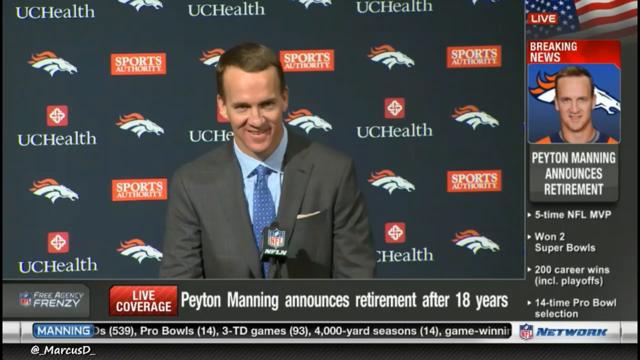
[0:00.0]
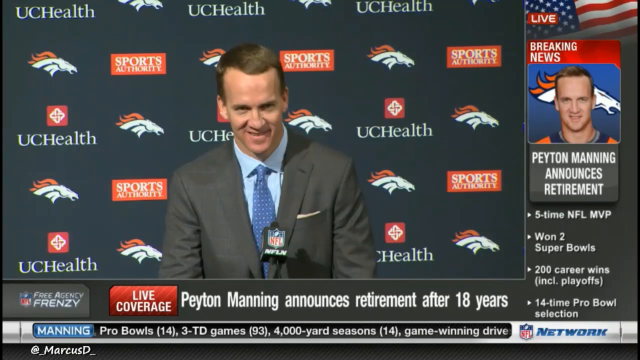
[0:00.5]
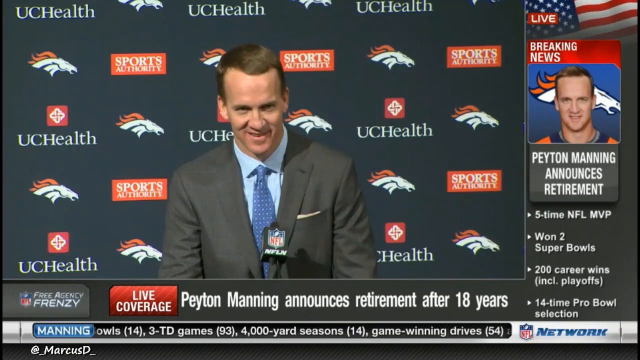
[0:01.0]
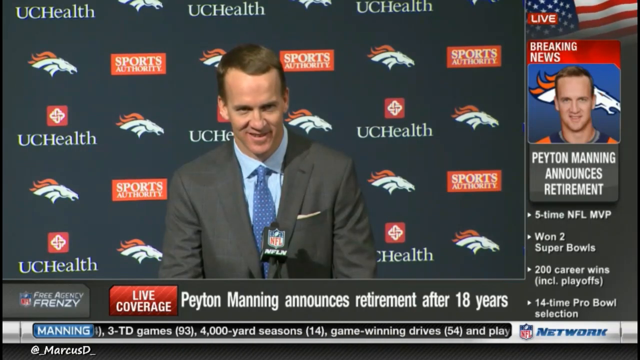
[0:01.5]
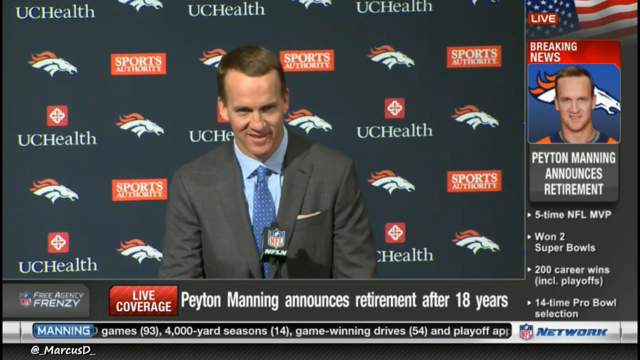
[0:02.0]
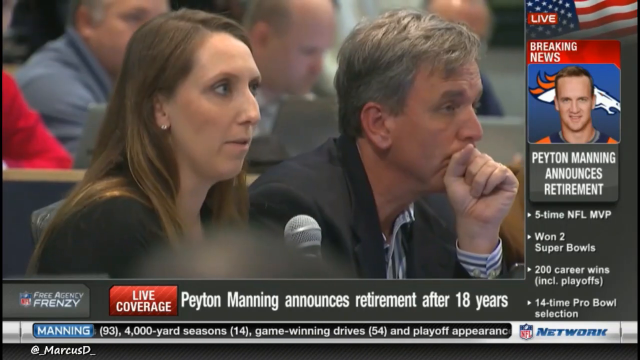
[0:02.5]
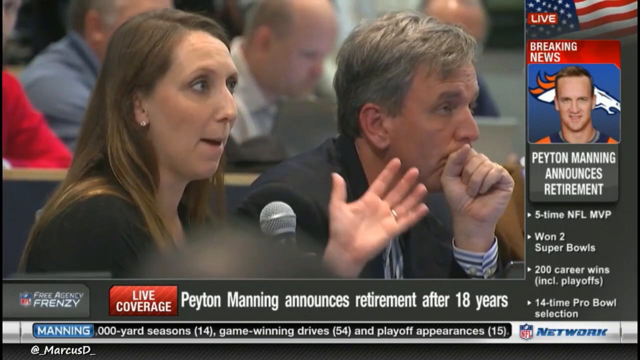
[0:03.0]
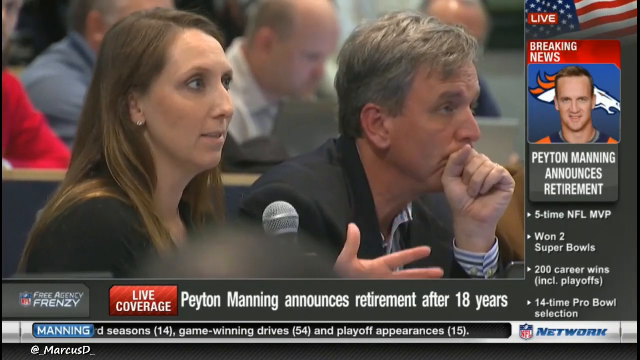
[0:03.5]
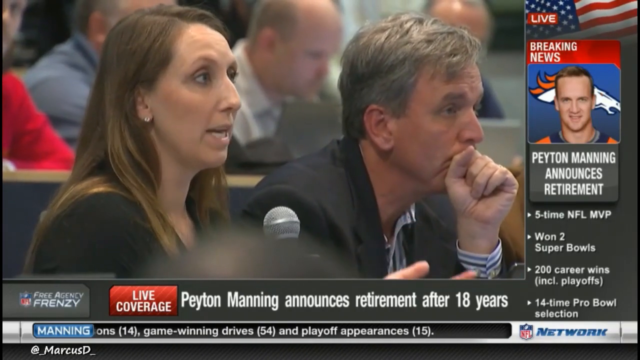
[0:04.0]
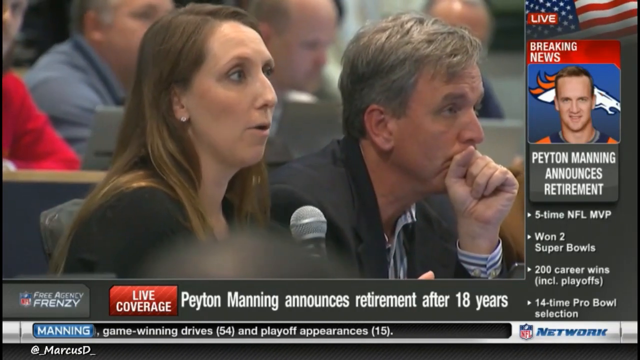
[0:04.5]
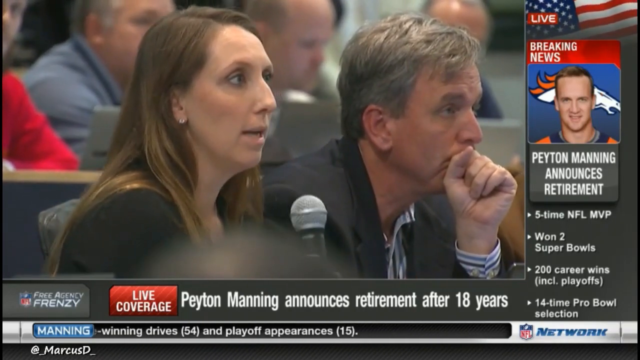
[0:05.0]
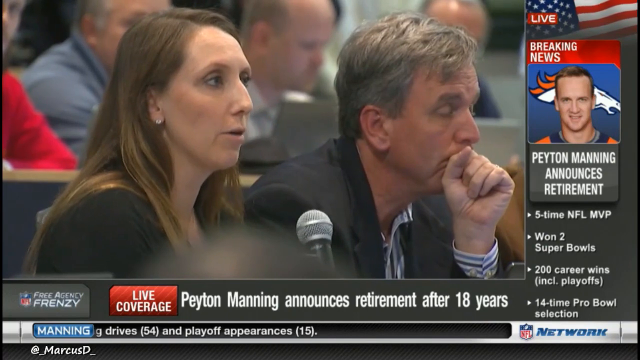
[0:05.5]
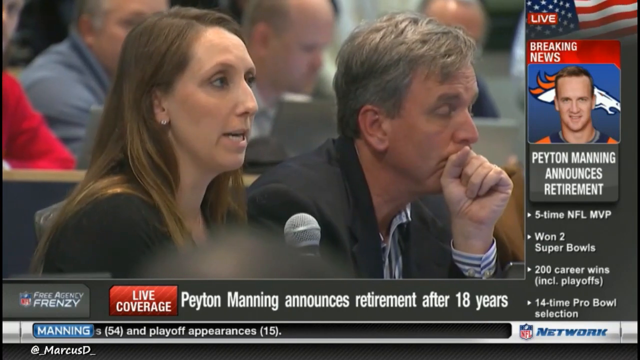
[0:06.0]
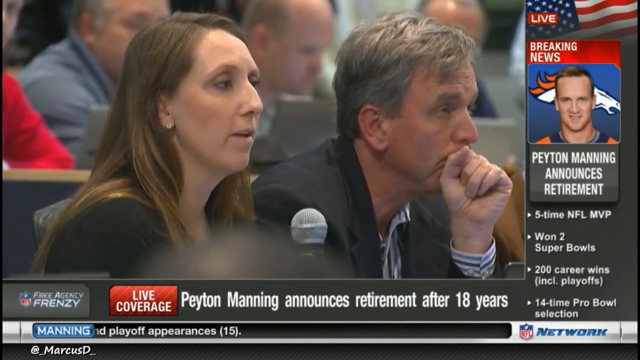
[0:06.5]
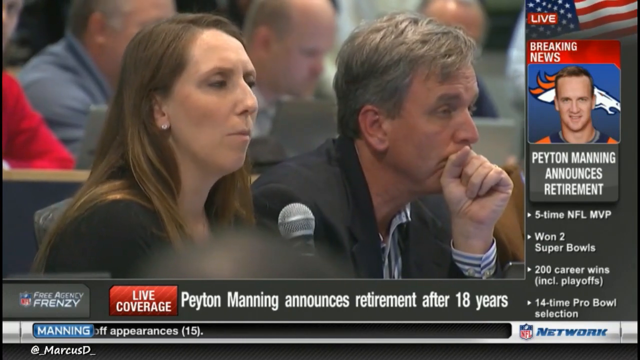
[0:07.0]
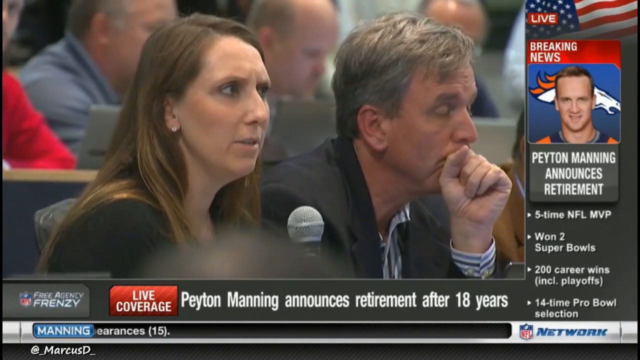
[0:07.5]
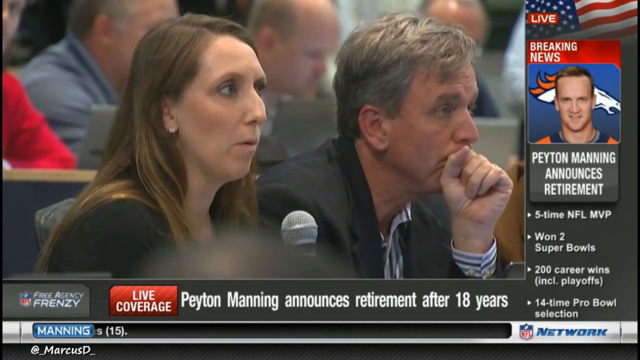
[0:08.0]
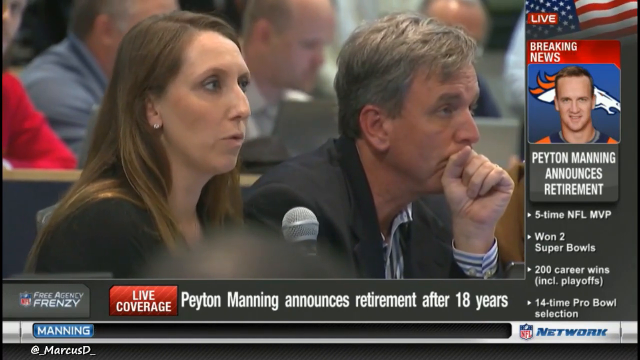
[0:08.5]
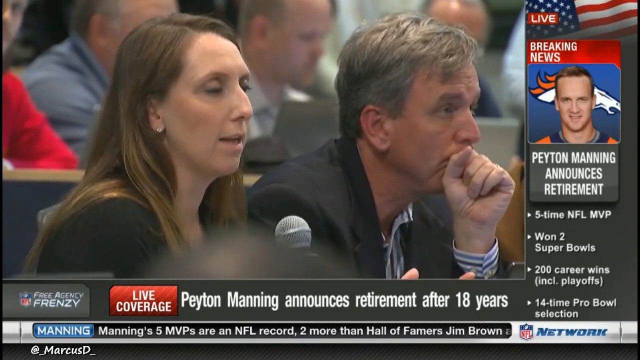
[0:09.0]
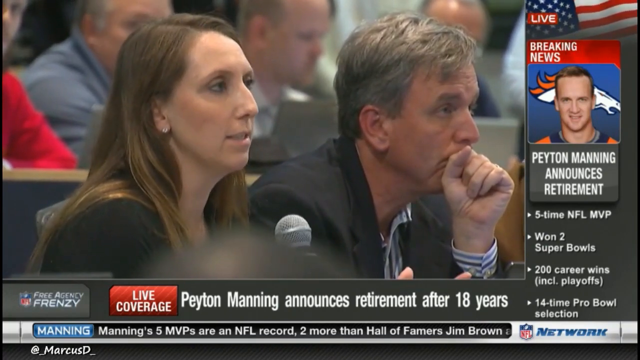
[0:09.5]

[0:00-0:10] Peyton Manning announces his retirement. On-screen information shows that he is a five-time NFL MVP, has won two Super Bowls, and has 200 career wins, inclusive of playoffs. He sits in front of a group of people, some of whom are asking him questions. He wears a gray suit, a light blue shirt, and a blue tie. The background wallpaper carries the UC Healthy logo, with its lettering and an animal shown as a horse's head. There is also an orange rectangle showing sports and athletics, though it is hard to see. Manning gives his announcement and takes questions from the people seated in front of him.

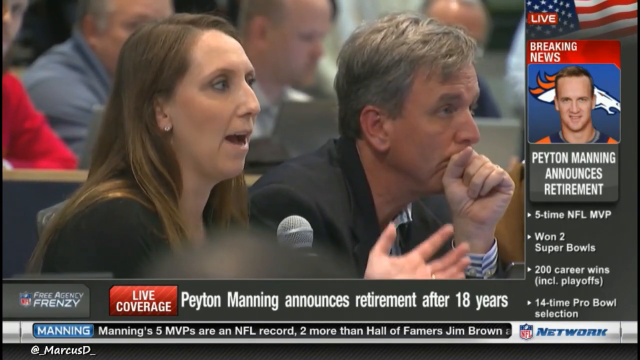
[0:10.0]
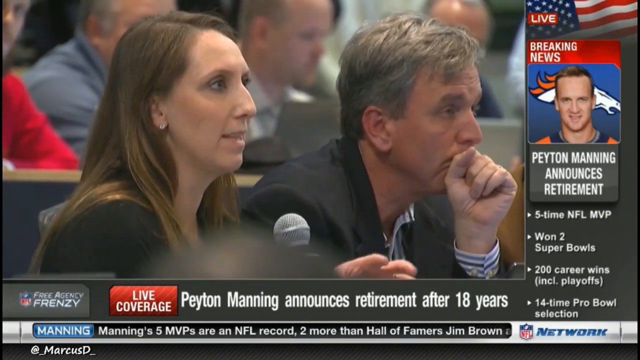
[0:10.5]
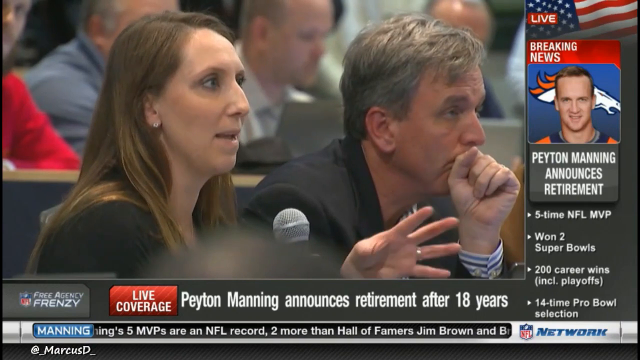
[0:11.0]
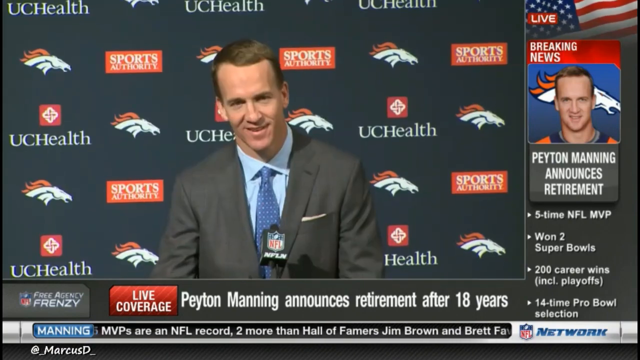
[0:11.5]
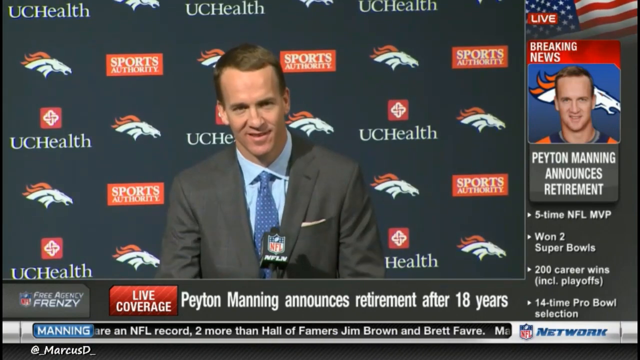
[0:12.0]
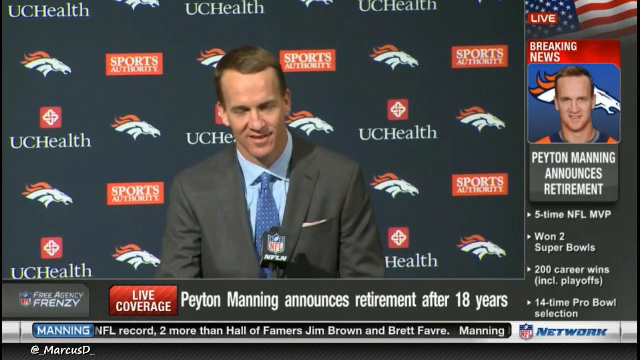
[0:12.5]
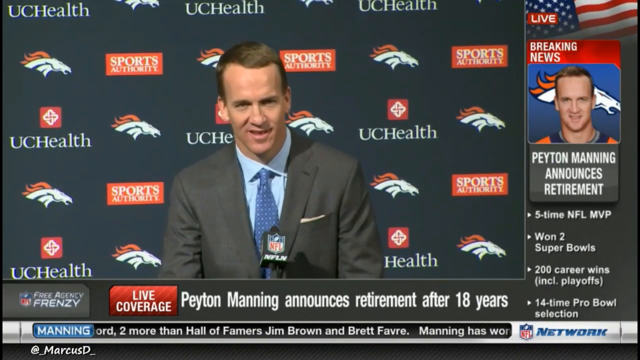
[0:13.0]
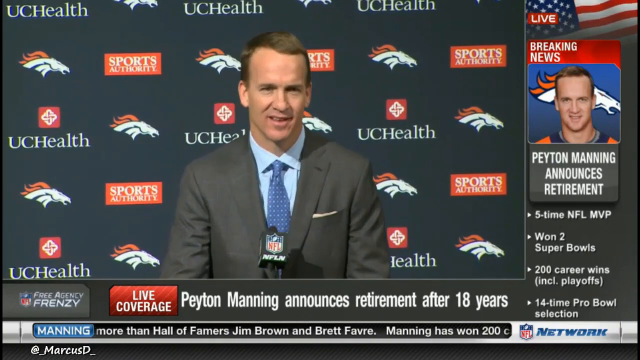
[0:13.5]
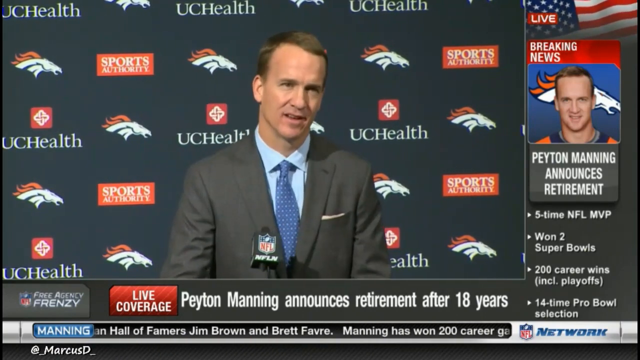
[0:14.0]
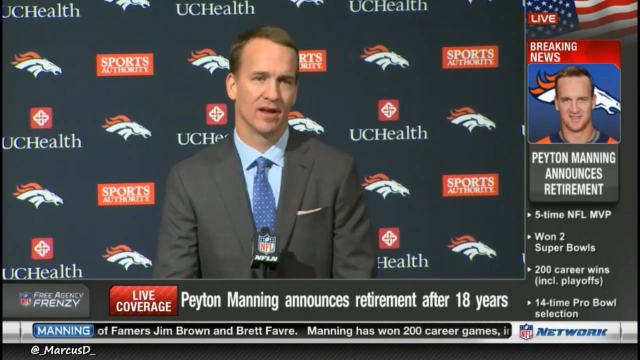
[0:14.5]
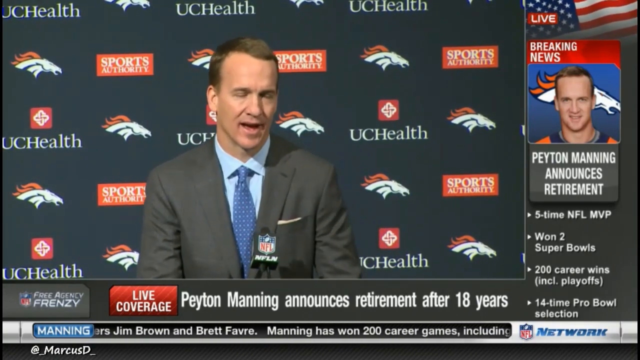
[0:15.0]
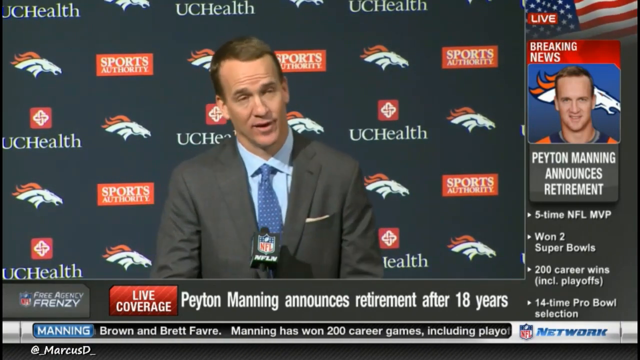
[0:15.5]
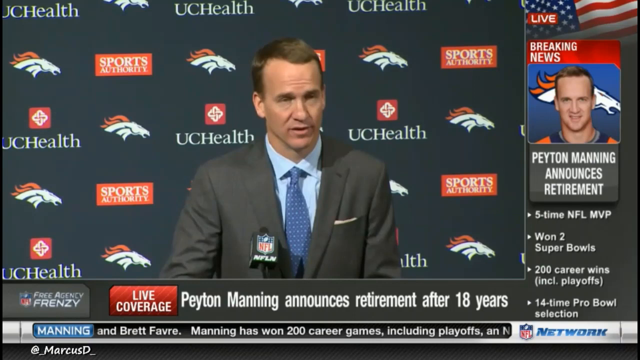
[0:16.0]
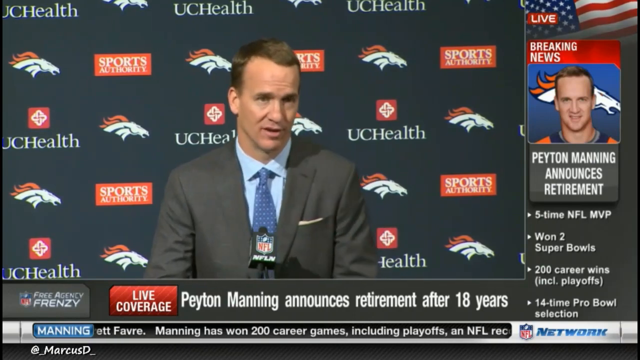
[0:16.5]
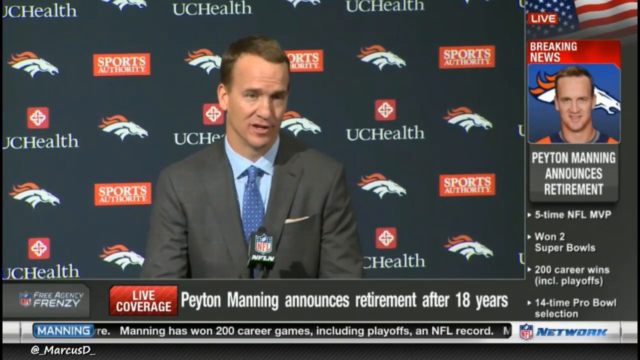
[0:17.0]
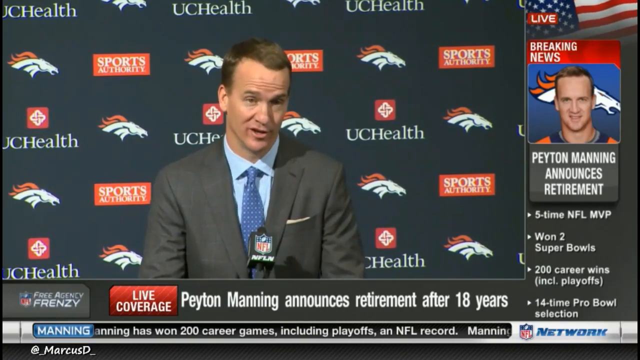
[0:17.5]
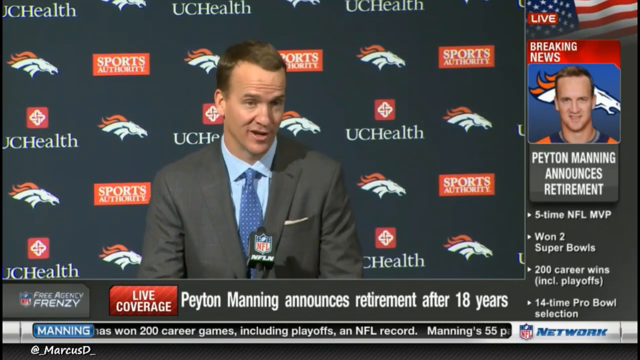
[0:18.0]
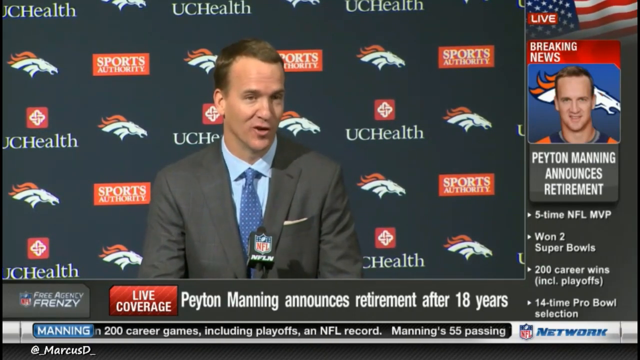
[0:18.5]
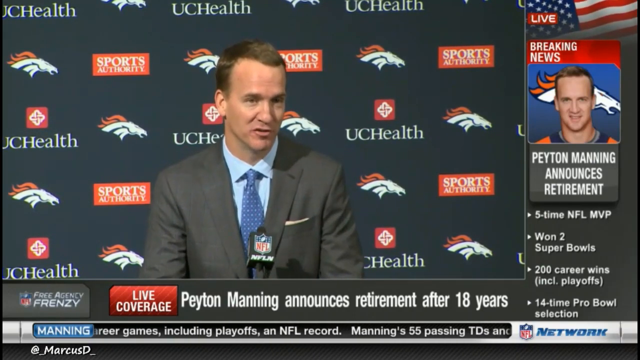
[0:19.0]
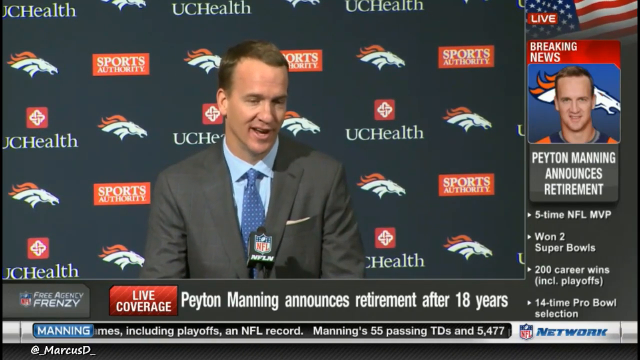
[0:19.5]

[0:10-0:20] A woman asks Peyton Manning questions about his announcement of retirement after 18 years, making hand gestures as she speaks, and Manning answers without showing any concern. She has long brown hair and a long face, and sits next to a man who holds his mouth with a fist. Manning is still seated in front of the wall with the UC Healthy logo and another sports logo. So far, only this woman has asked questions.